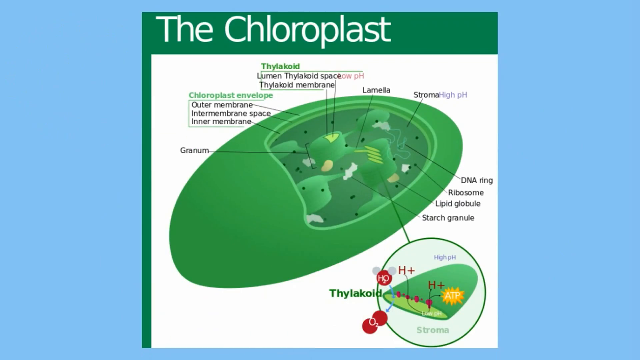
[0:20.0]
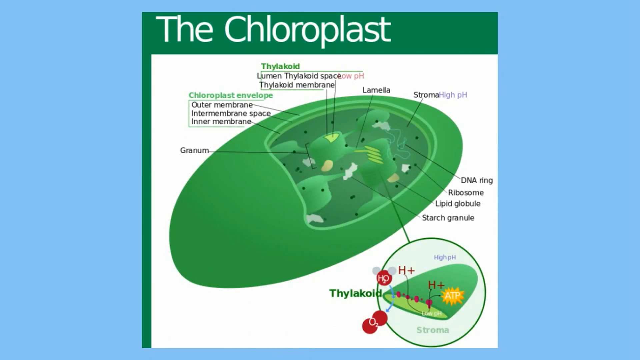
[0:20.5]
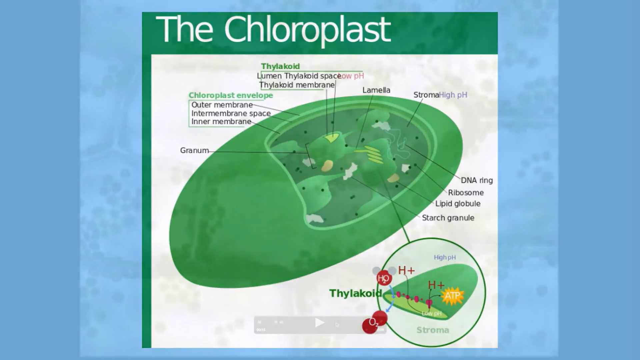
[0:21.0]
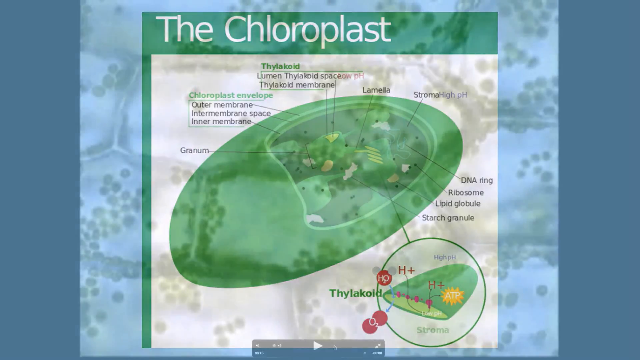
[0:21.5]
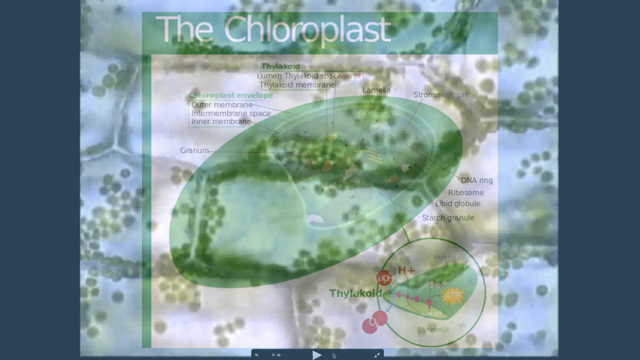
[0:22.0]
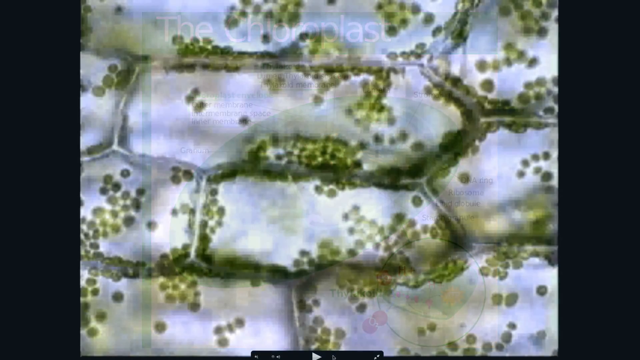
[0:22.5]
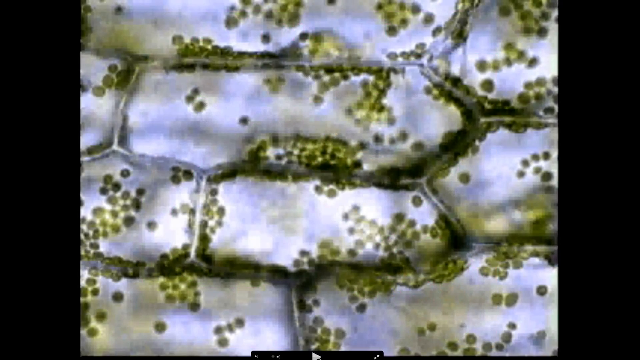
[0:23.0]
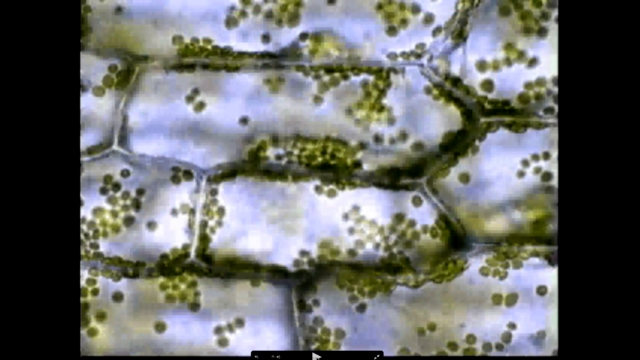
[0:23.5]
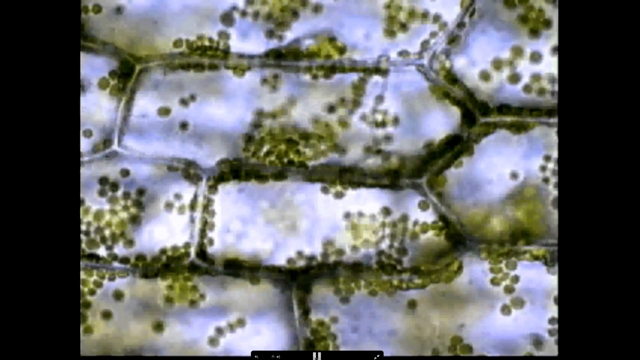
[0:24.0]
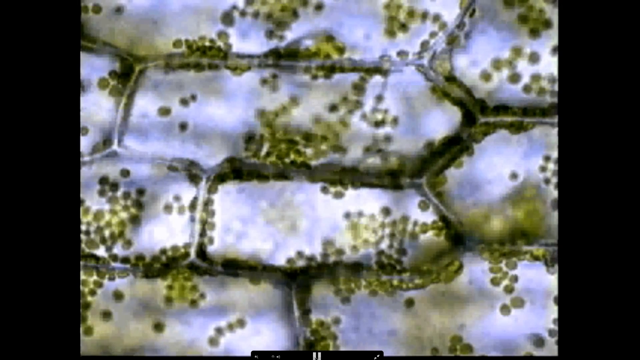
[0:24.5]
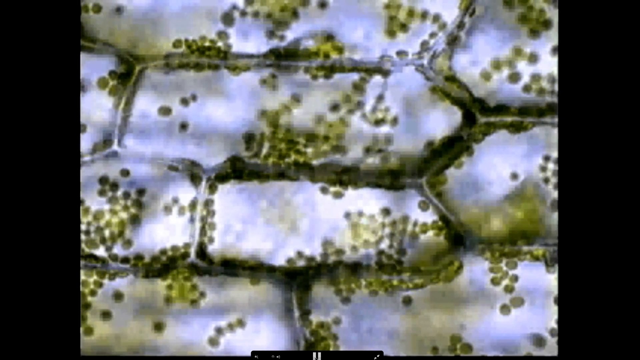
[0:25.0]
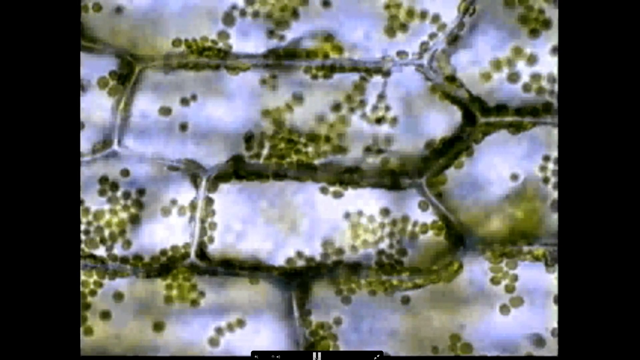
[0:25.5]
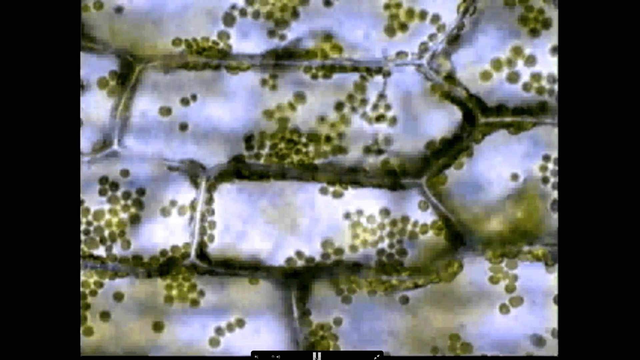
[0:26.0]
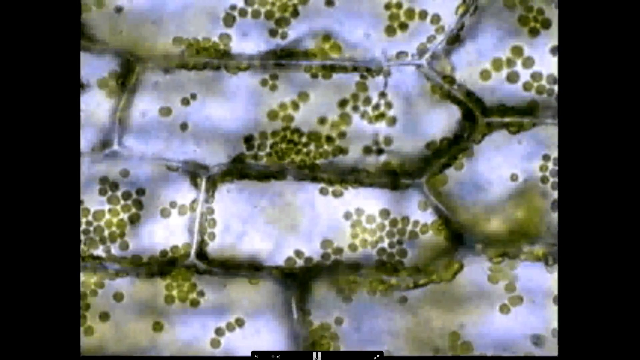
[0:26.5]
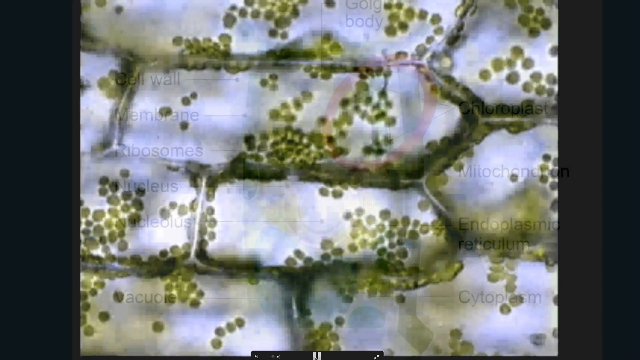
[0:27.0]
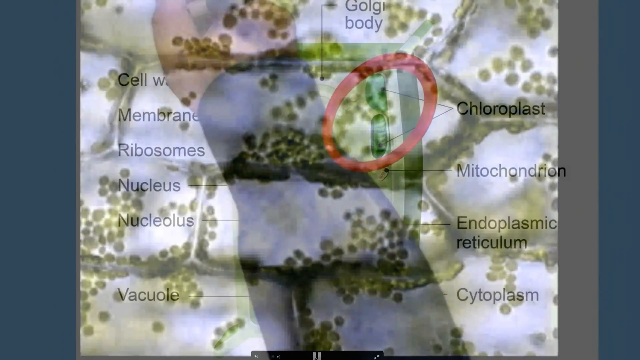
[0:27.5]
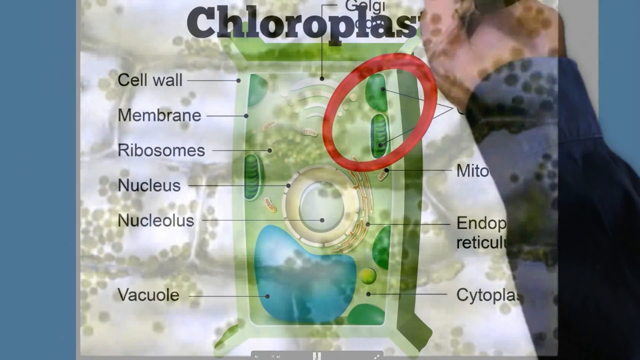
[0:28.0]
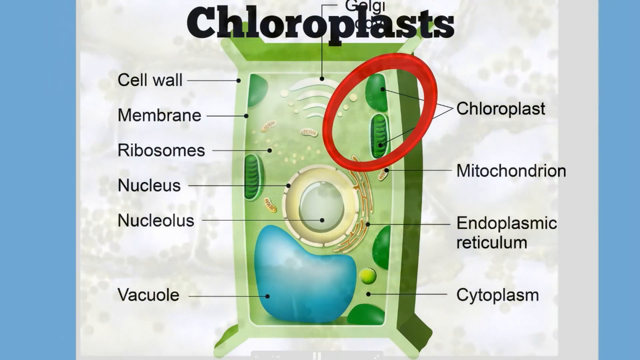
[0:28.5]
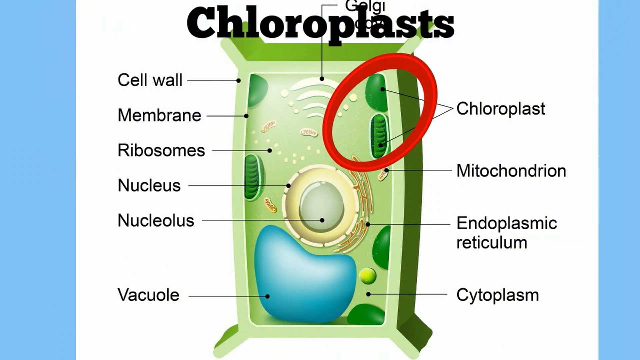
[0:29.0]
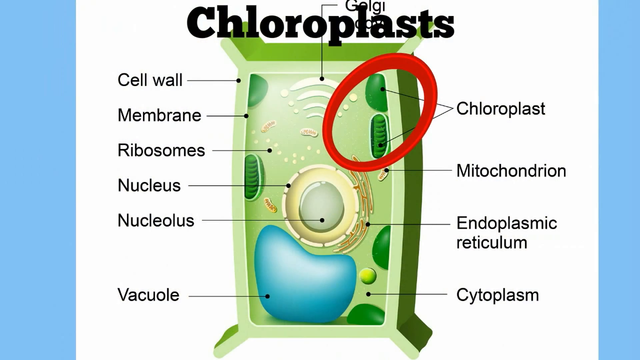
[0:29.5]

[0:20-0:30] White text at the top reads "the chloroplast," with a green border around the image. There is what looks like a page, and a picture of a chloroplast with many arrows pointing off it, labeling the insides, different proteins and other parts. The picture changes to what looks like a real picture of a chloroplast at the atomic level. It then fades into a new picture of a chloroplast, with text on the left such as "cell wall," "membrane," "ribosomes," "nucleus," "nucleolus" and "vacuole." On the right side there is a red circle around the chloroplast itself, with the mitochondrion below it, the endoplasmic reticulum and the cytoplasm. There are green circles on the inner part of a rectangular green thing, and a big blue item at the bottom with an egg shape in its center. The diagram has many parts showing the different inner structures.